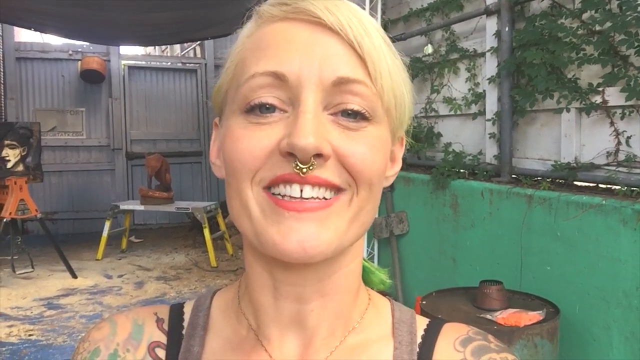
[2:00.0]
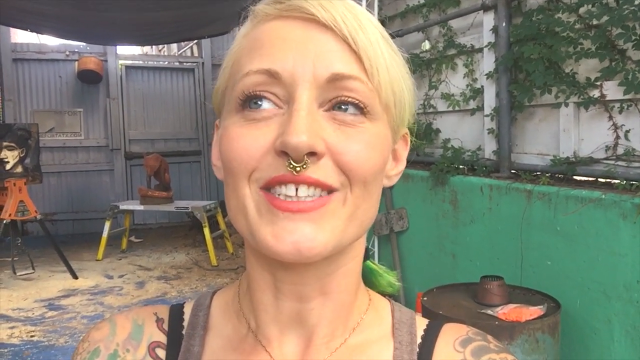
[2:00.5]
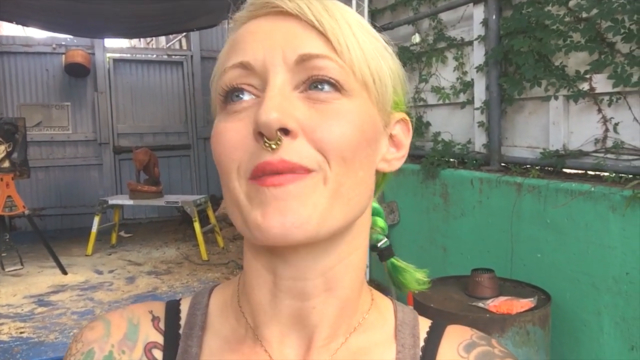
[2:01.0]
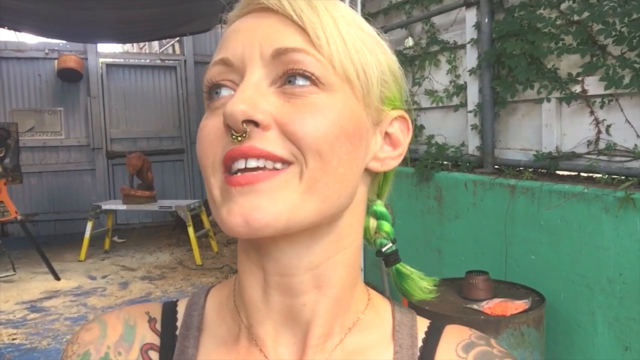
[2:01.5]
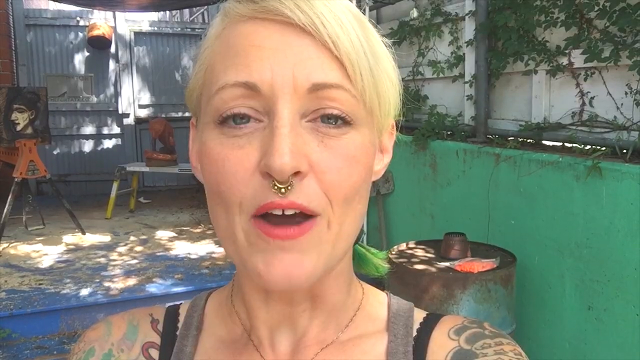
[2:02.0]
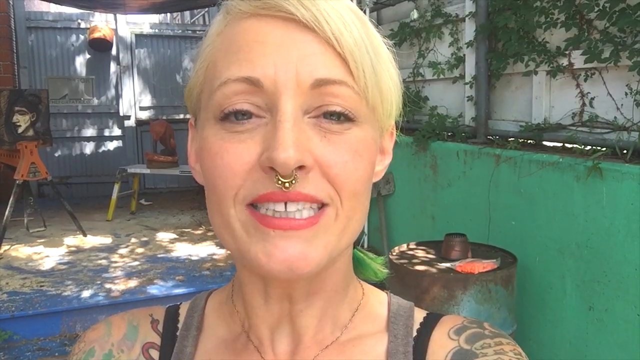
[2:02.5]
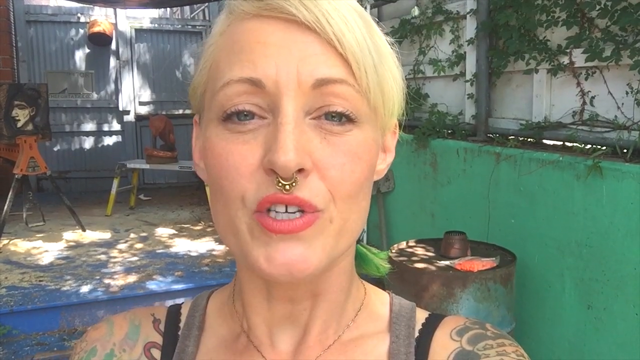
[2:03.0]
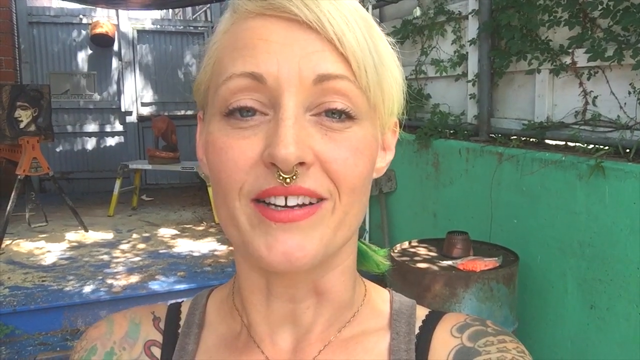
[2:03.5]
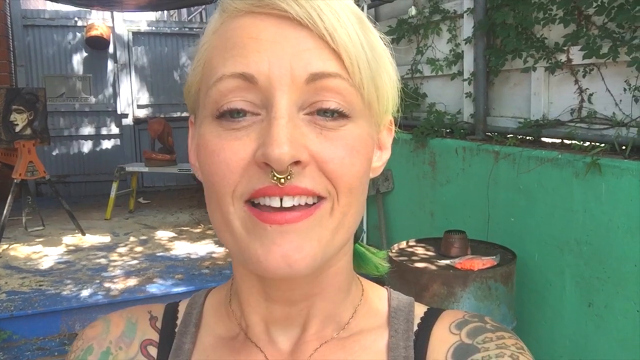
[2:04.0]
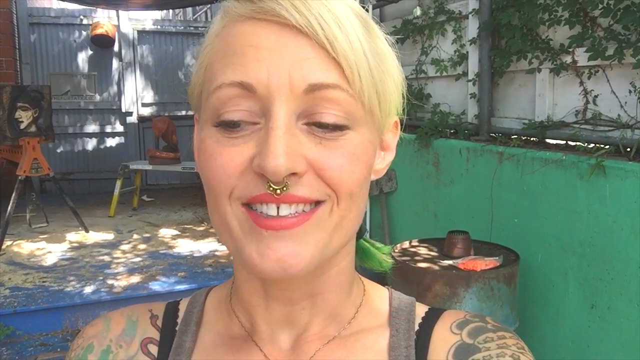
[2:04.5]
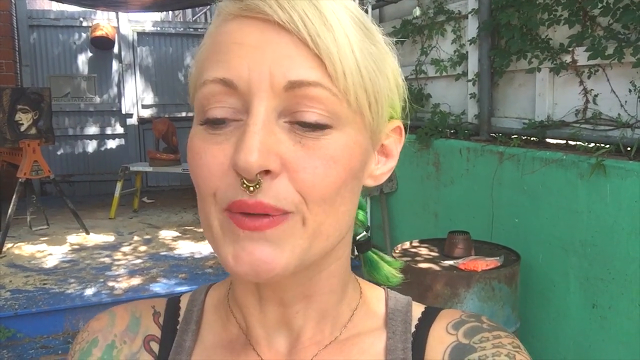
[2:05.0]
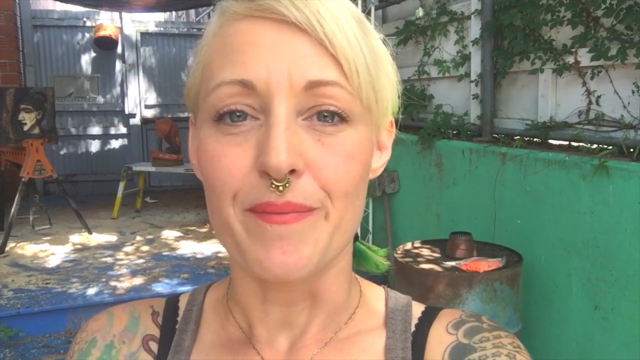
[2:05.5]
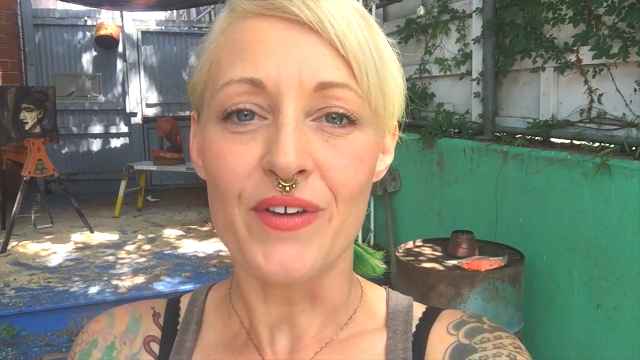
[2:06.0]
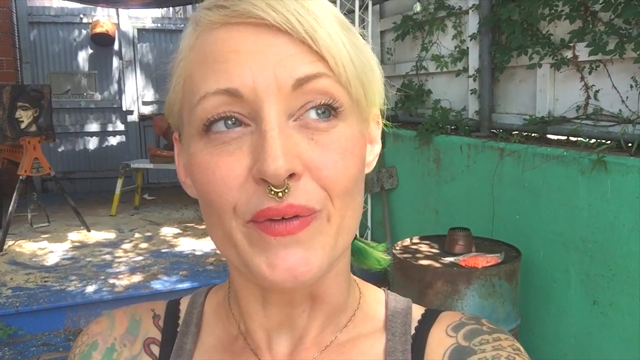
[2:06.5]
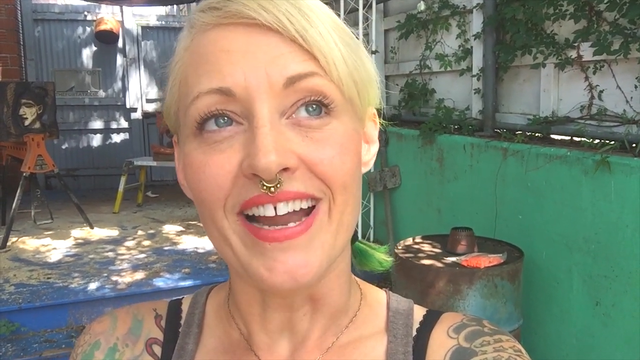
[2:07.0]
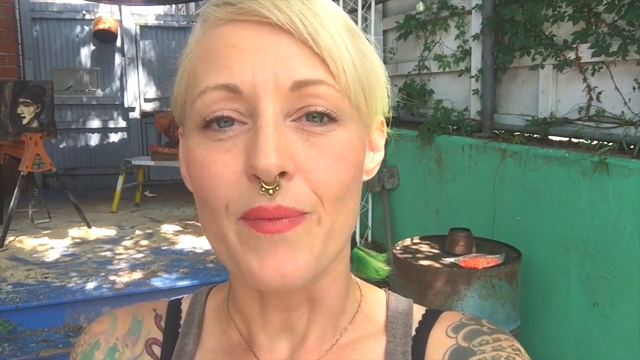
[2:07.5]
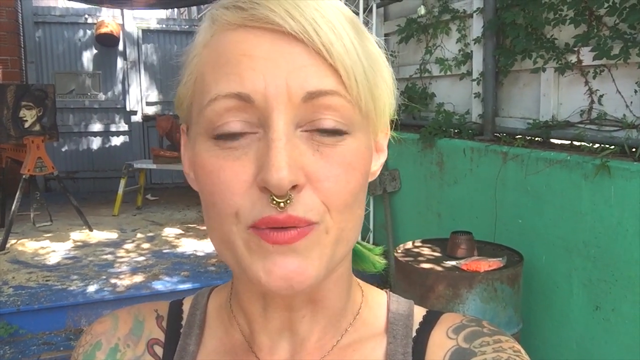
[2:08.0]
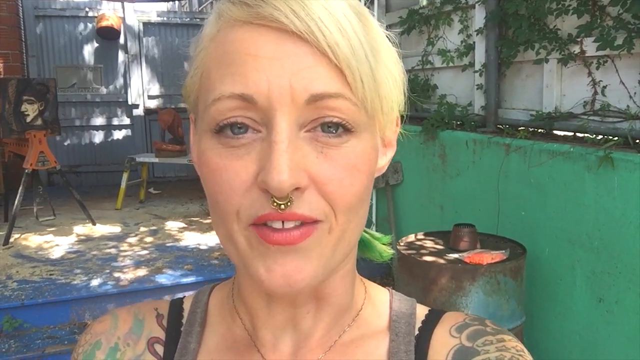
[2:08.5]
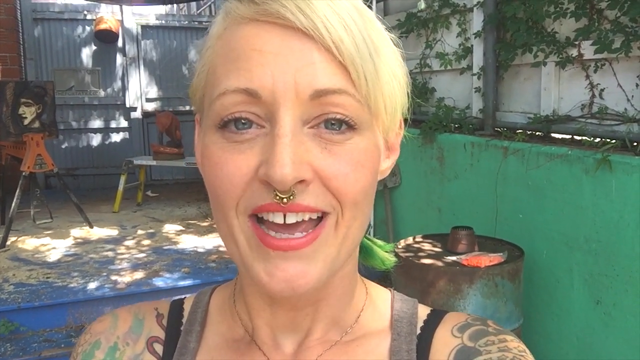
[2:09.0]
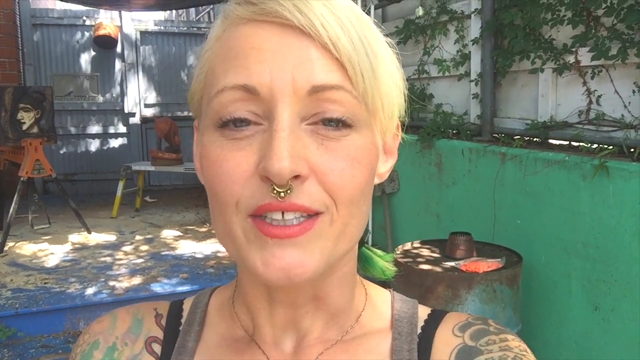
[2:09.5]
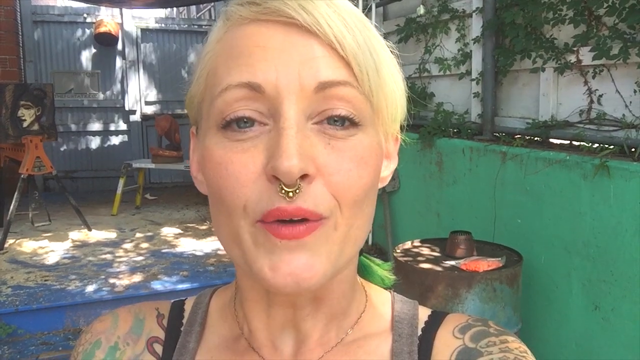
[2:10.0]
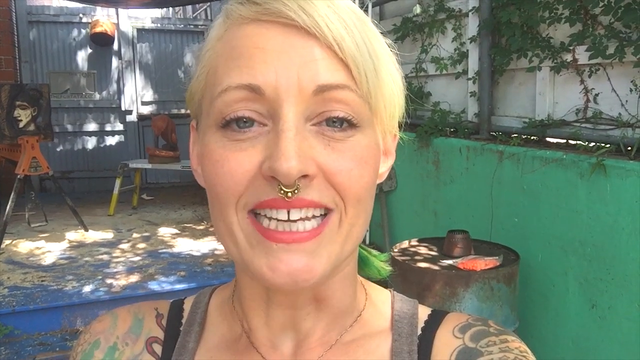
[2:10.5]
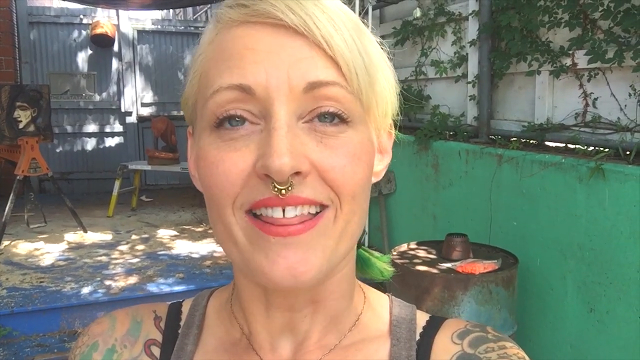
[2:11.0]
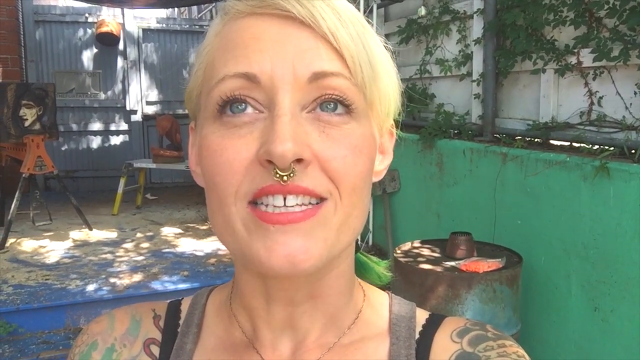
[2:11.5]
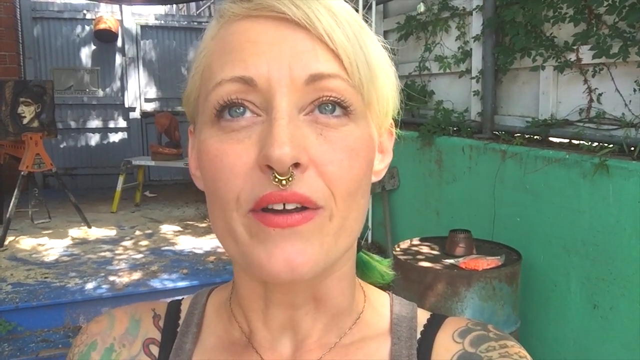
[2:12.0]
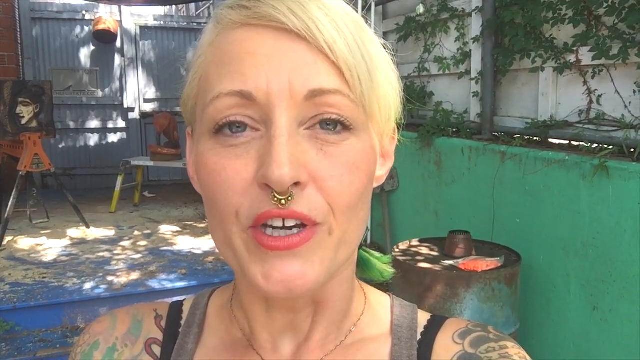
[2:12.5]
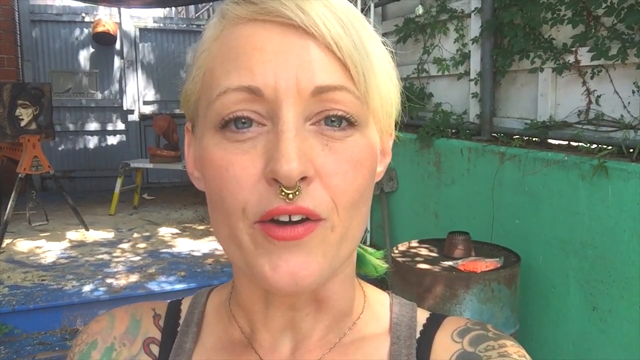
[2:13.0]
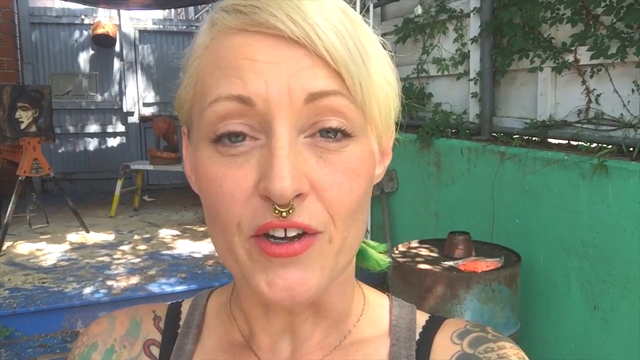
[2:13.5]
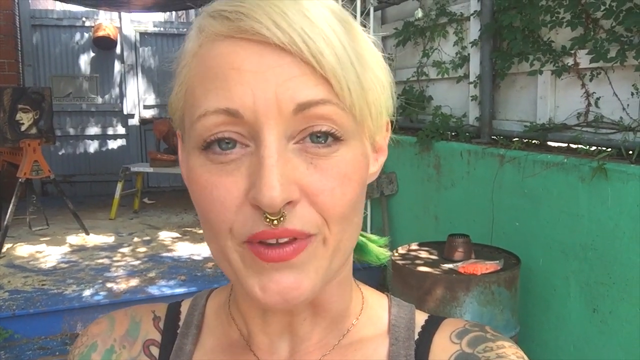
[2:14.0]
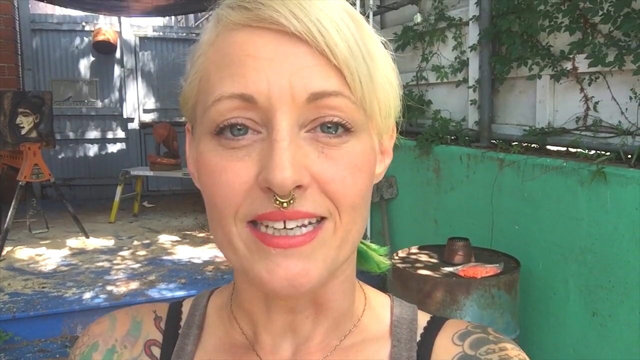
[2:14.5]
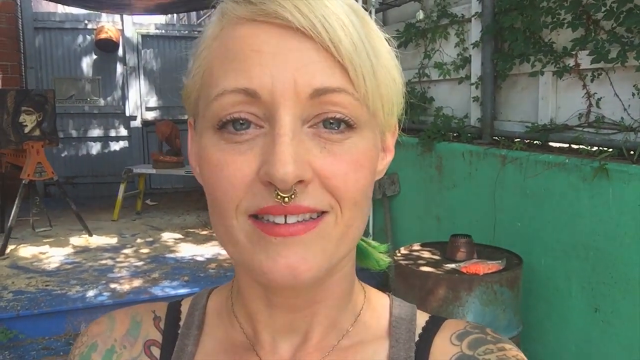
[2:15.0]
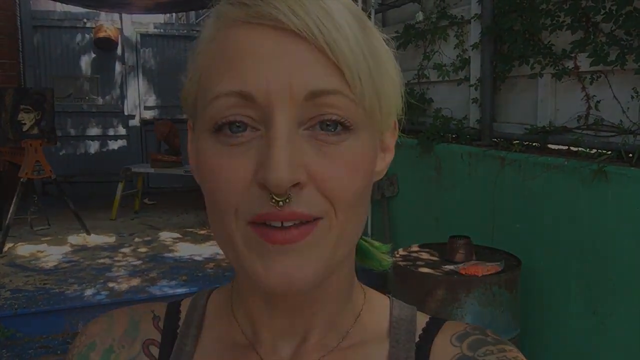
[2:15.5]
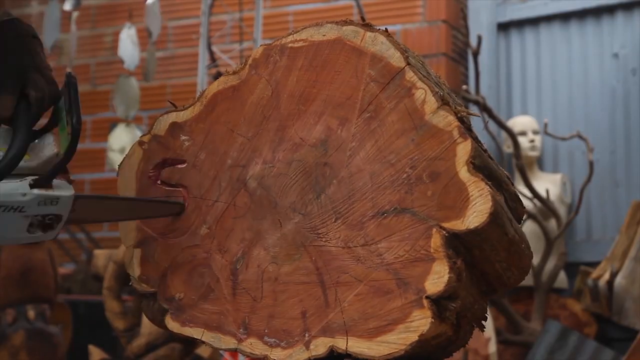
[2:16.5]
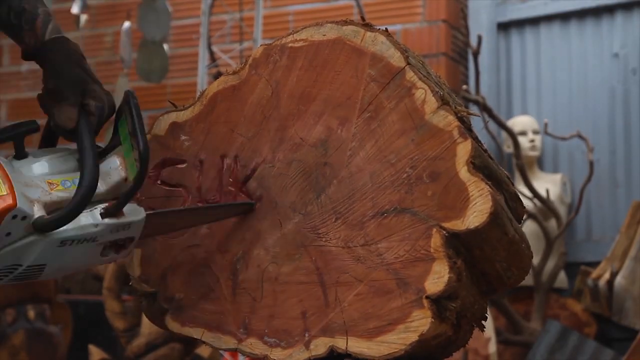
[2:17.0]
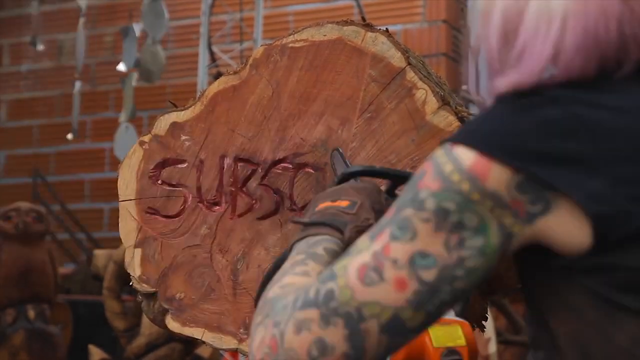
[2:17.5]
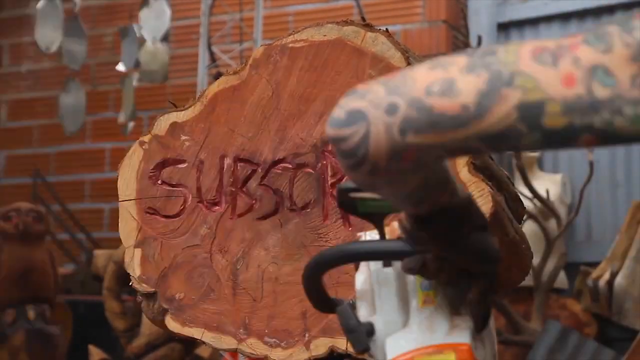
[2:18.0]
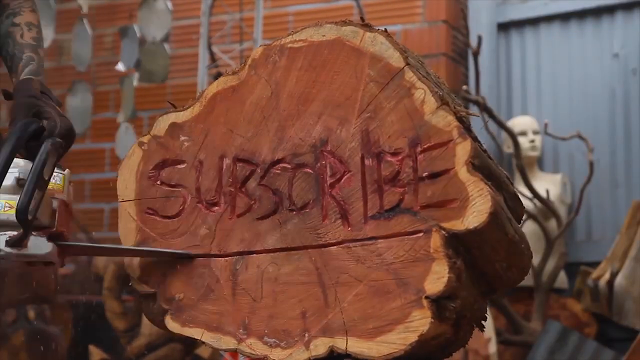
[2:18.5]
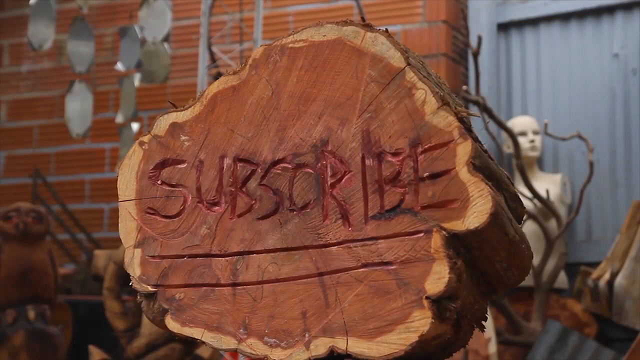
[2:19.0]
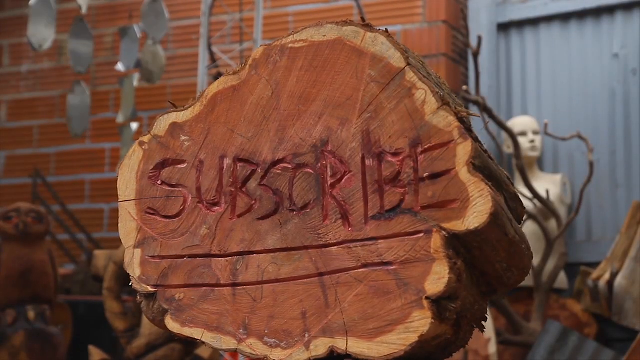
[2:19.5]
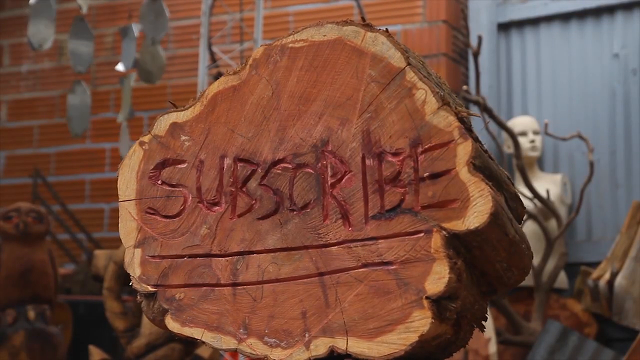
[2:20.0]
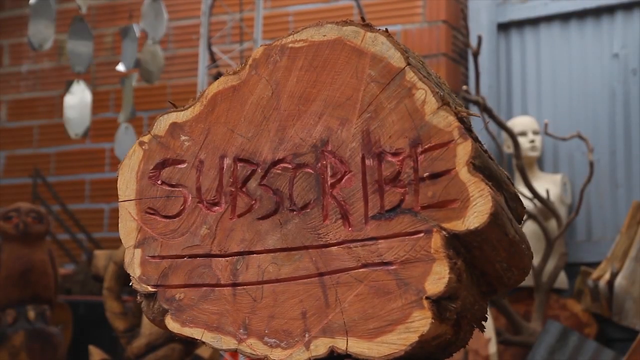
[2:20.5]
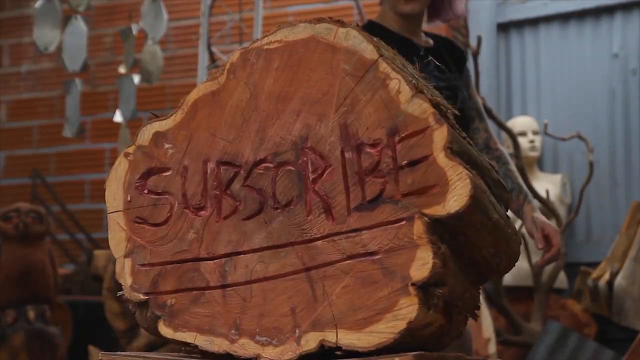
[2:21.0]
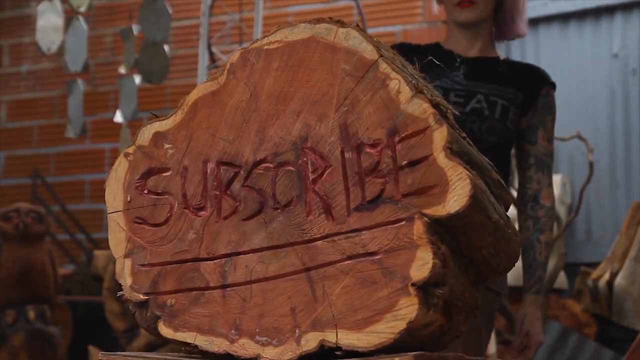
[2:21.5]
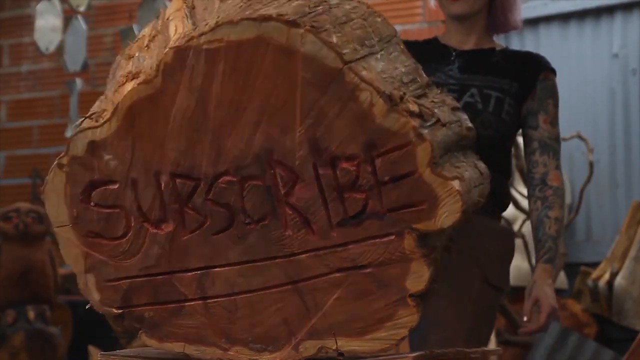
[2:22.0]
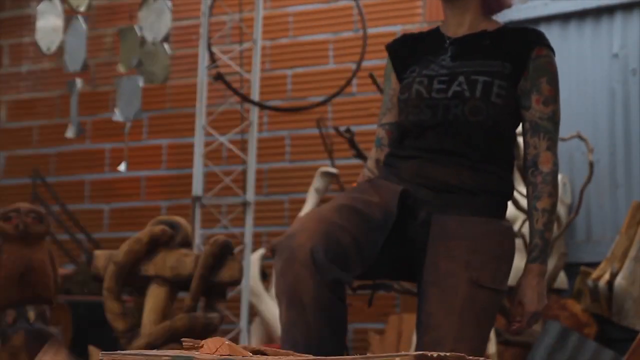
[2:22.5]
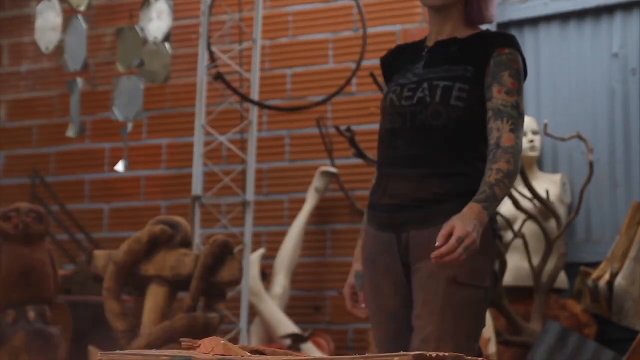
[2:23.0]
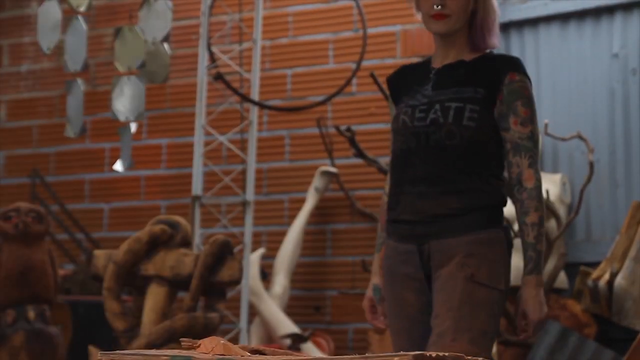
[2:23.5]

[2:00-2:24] In the garden, a painting is behind the woman and a sculpture is clearly visible in the background. To her right is a bin used to burn rubbish, and a green canopy is overhead. She looks at the camera and wears a gold necklace. As she talks, her eyes move from side to side and then up, as if she is trying to recall something. The scene fades to black, and the next scene shows a tree stump. Behind it is a white mannequin with no arms resting against a grey corrugated fence, and there is a brick wall at the back of the room. A chainsaw starts carving letters into the tree trunk, and it becomes clear that the person holding the chainsaw is the woman. She moves to the right of the screen, revealing the rest of the workshop, which has mirrors hanging down like a mobile, and finishes carving the word "subscribe" into the stump. She has a tattoo sleeve that looks to be of Japanese cartoon characters. The woman then appears behind the tree trunk and kicks it over.